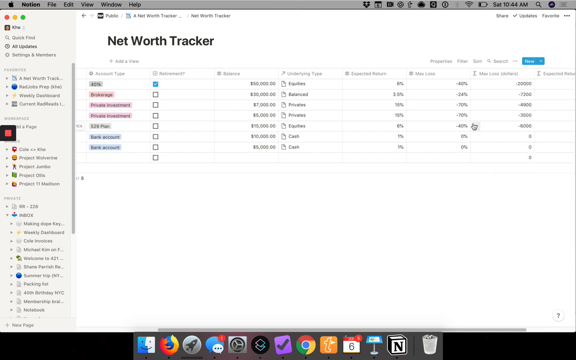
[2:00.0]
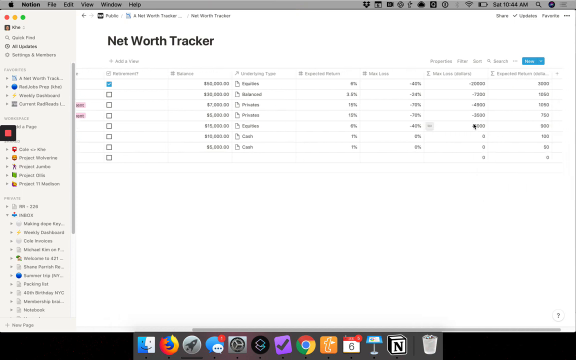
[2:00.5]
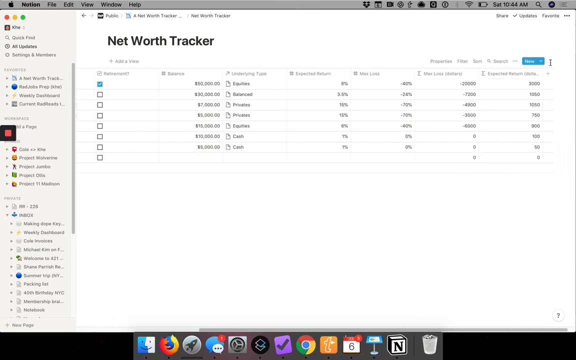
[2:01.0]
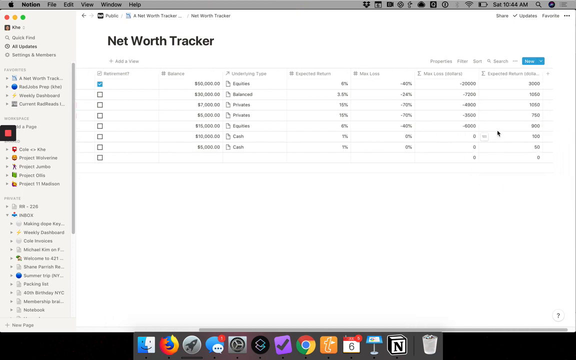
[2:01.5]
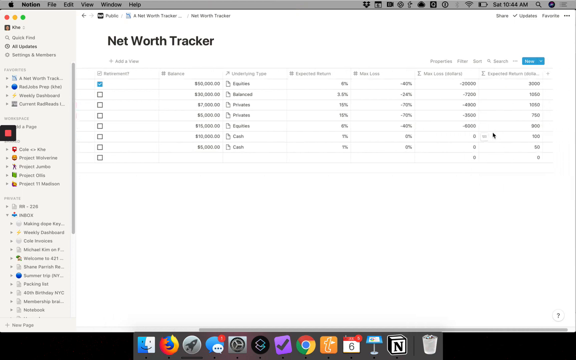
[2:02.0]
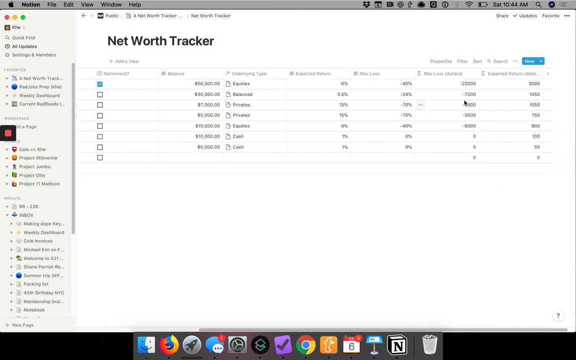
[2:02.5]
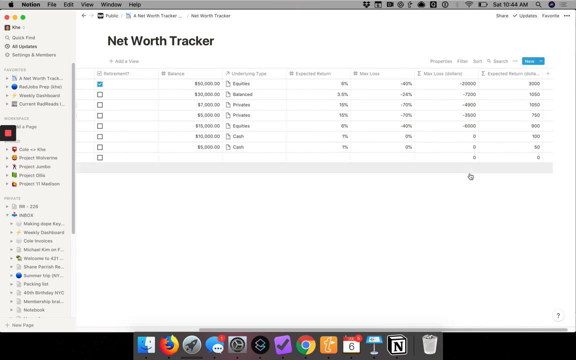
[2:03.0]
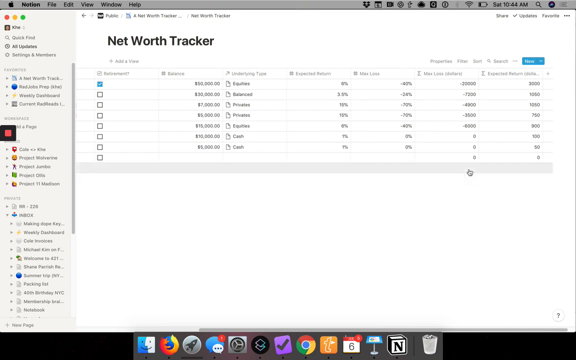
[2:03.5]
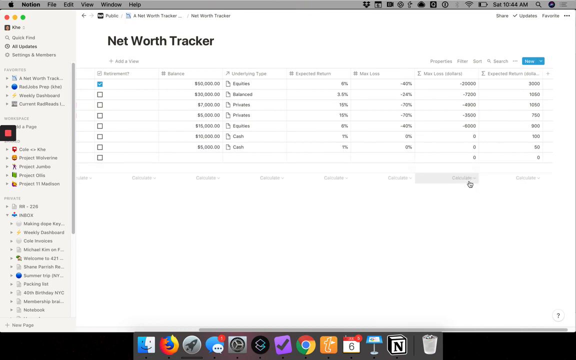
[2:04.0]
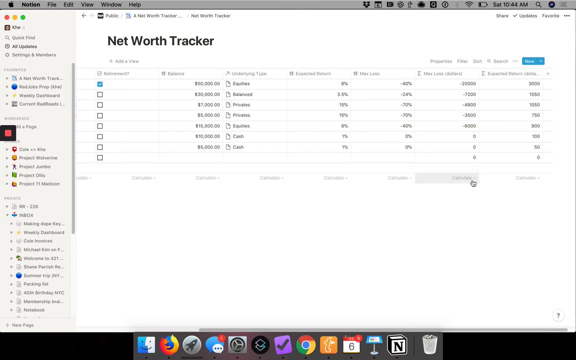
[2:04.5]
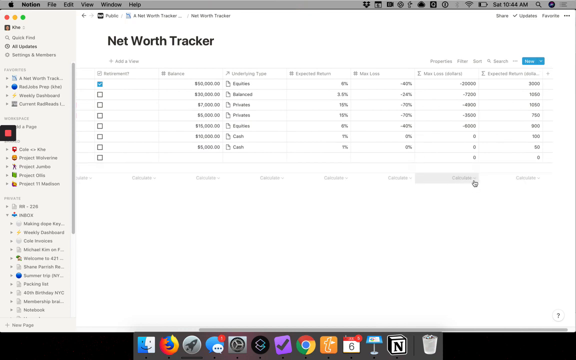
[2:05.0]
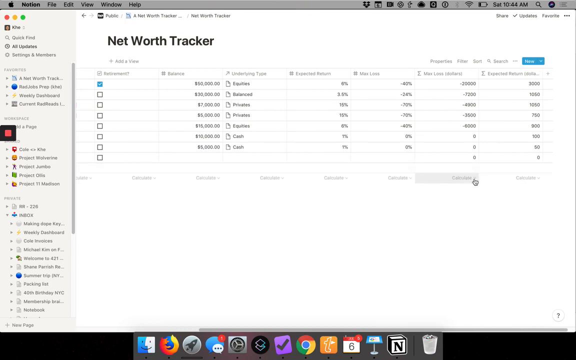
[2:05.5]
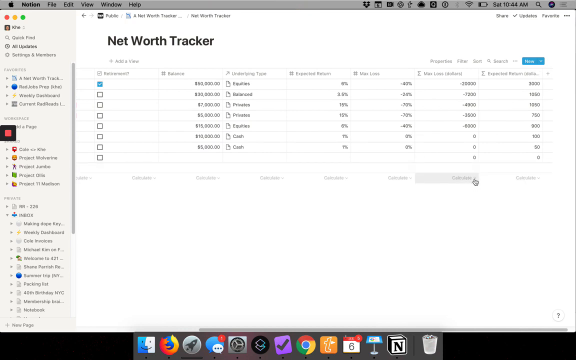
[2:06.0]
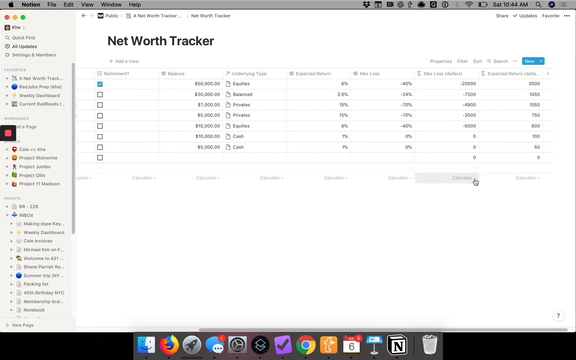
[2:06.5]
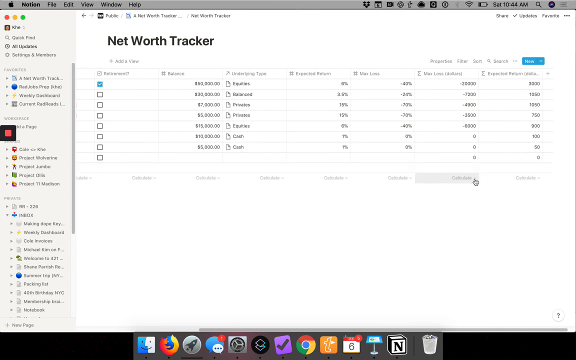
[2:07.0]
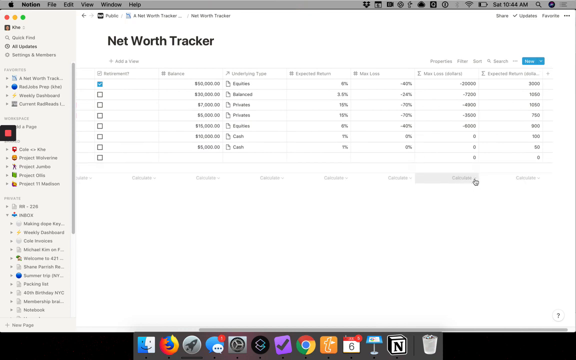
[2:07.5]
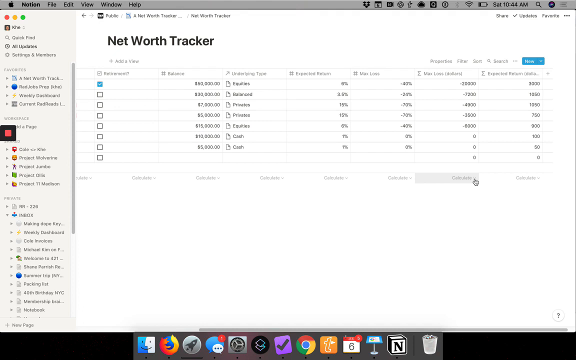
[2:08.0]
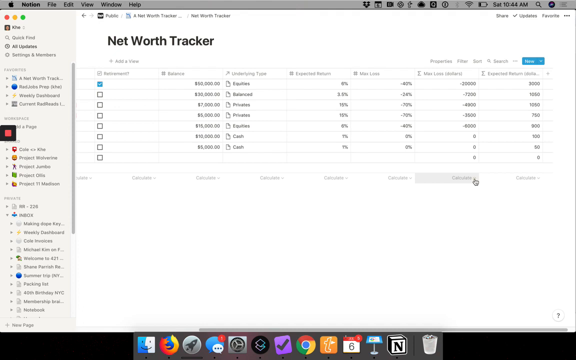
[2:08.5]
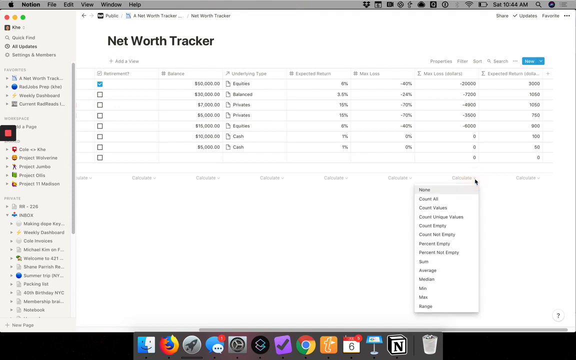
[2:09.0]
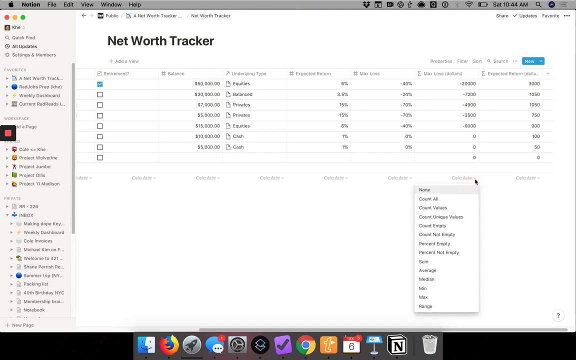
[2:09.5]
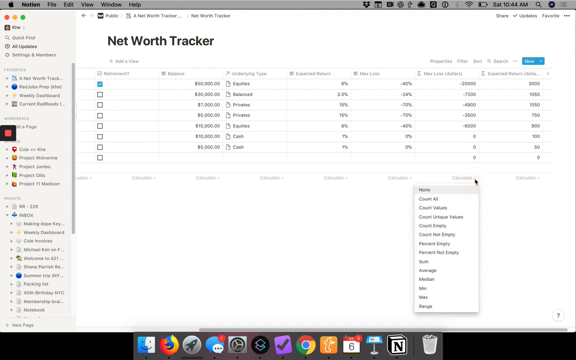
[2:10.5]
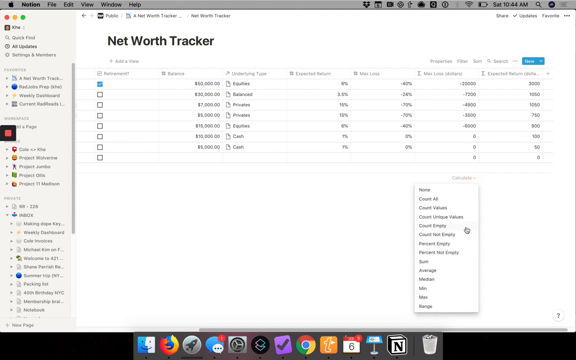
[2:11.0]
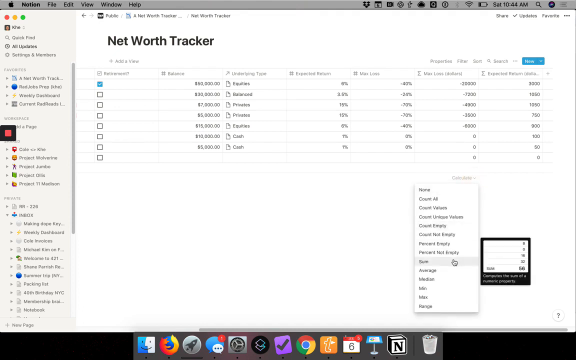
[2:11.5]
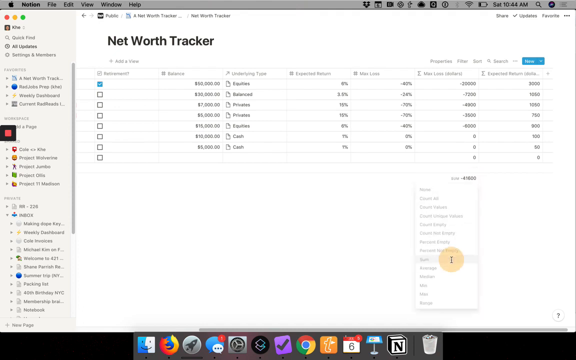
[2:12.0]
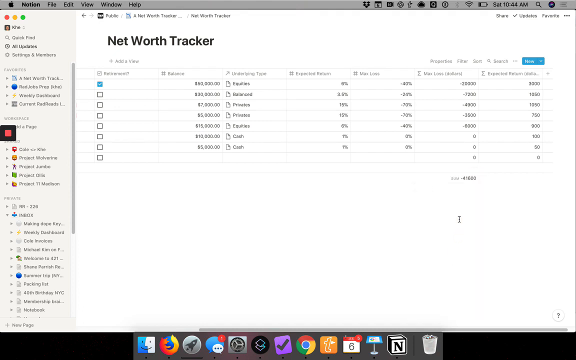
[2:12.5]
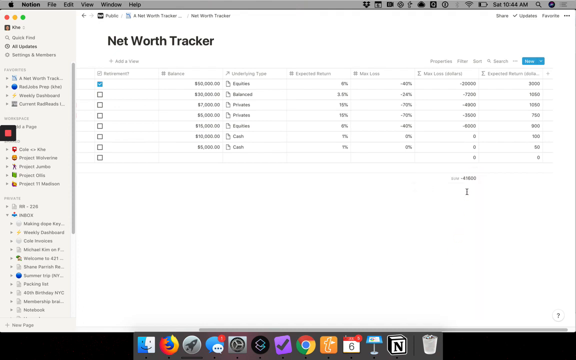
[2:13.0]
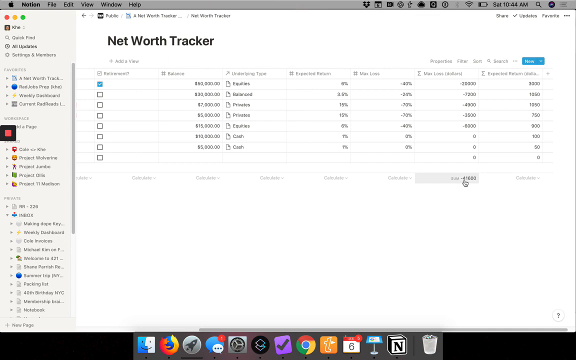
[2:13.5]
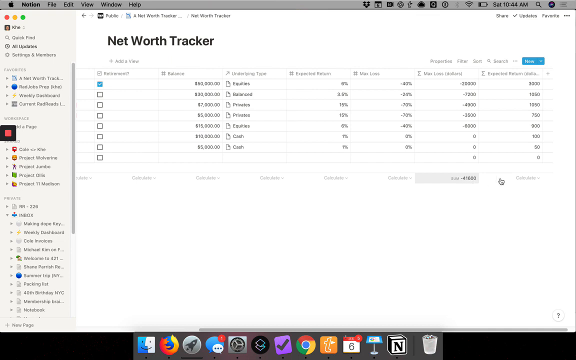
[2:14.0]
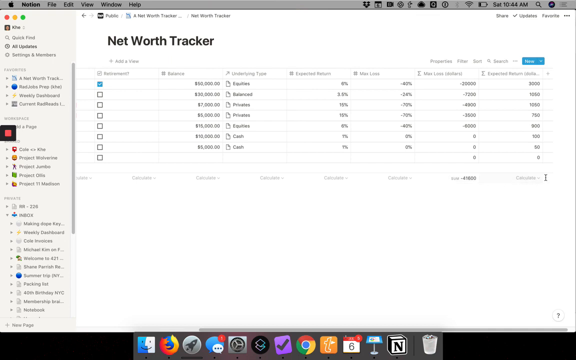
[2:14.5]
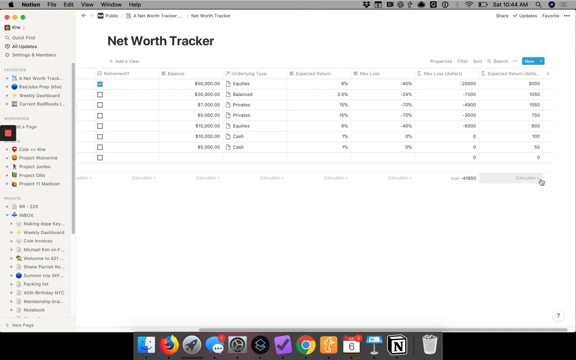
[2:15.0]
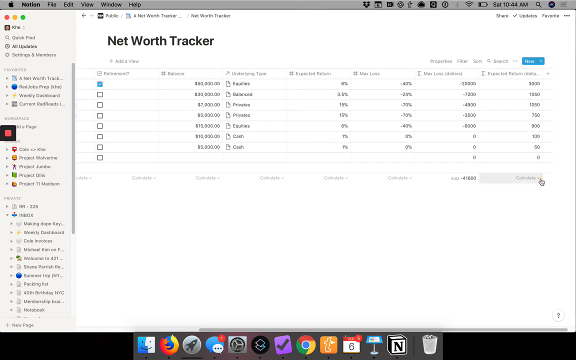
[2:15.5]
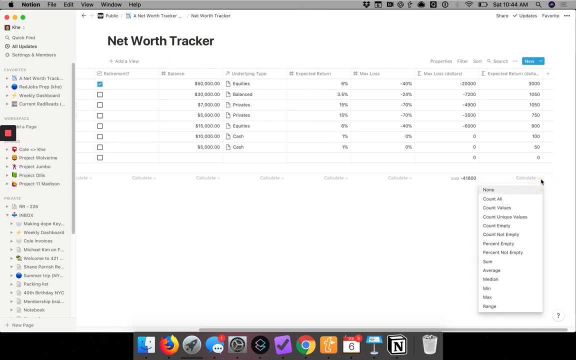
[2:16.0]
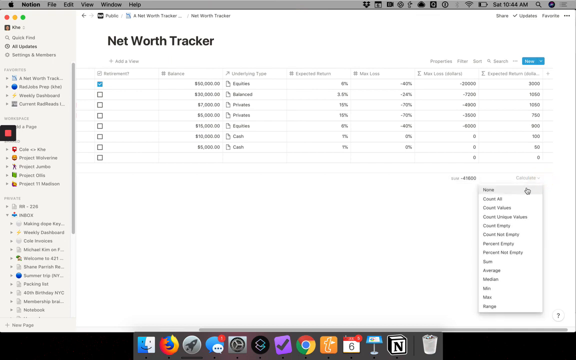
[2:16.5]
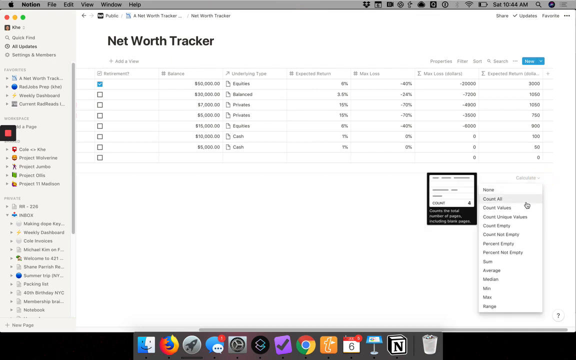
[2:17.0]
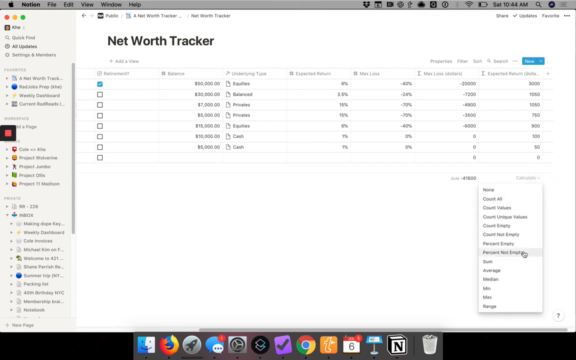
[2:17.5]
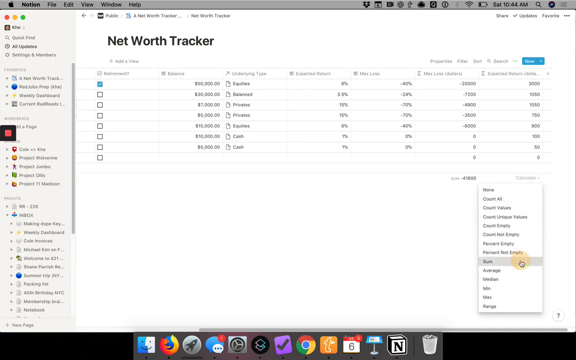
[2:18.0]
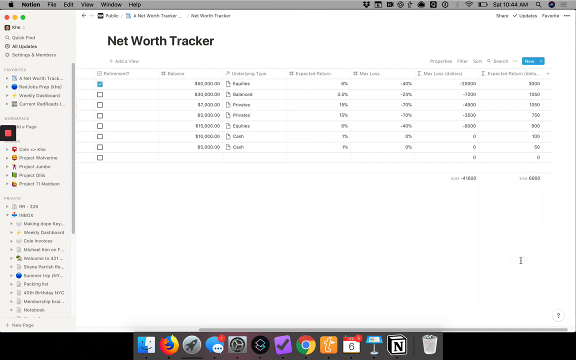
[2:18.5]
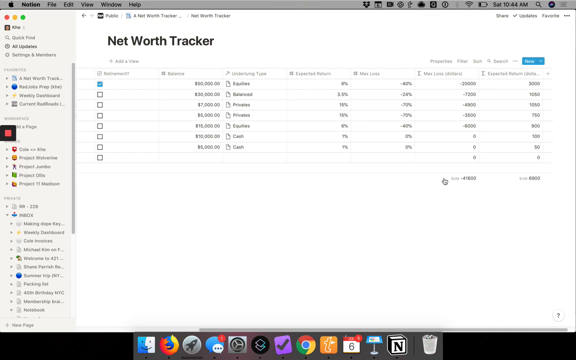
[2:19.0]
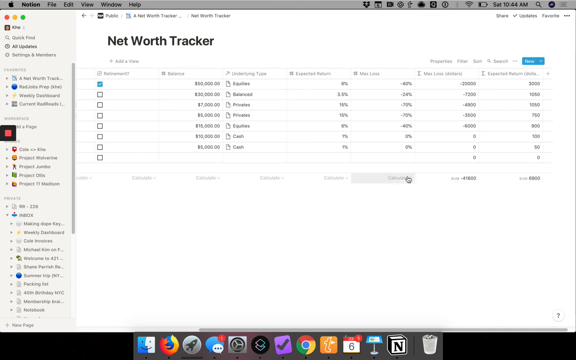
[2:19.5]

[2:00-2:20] A recording of someone's Apple laptop shows an Apple logo in the upper left corner, some selectors for drop-down menus, and the date and time in the far upper right corner. The main part of the page has a white background reading "Net Worth Tracker," with a number of columns, probably at least eight or nine, with words typed on the left side and check mark boxes toward the middle. A black pointer clicks in different places all across the page, then changes from a black arrow to a white hand. It clicks a word on the page, which opens a smaller rectangular box with many different words. The user clicks a word in that box, the box goes away, another word is selected, another box pops up, and so on, continuously clicking and selecting things.